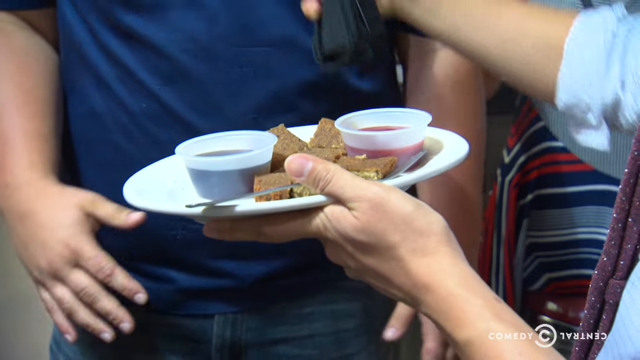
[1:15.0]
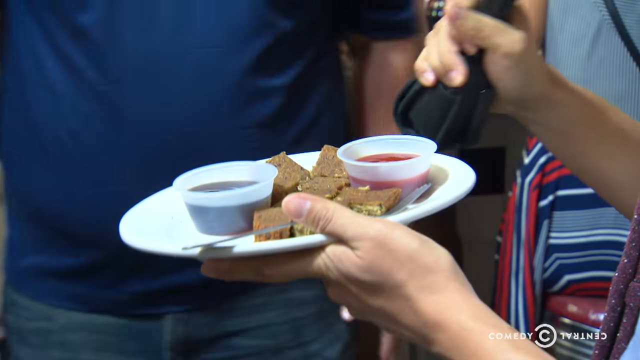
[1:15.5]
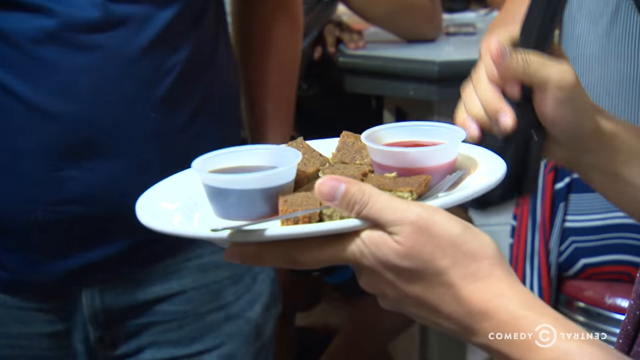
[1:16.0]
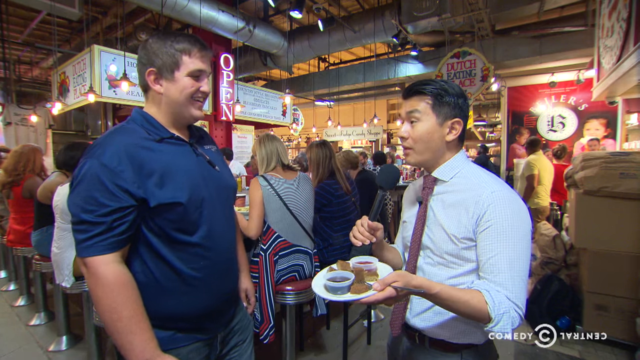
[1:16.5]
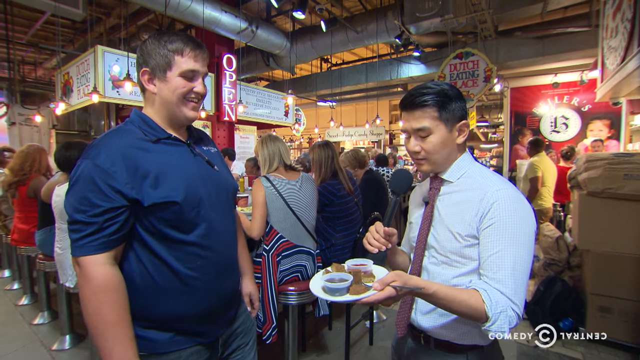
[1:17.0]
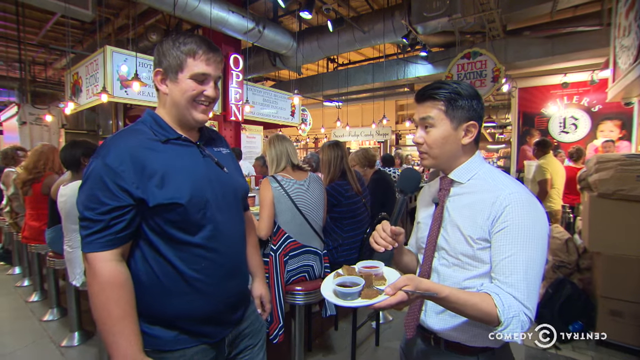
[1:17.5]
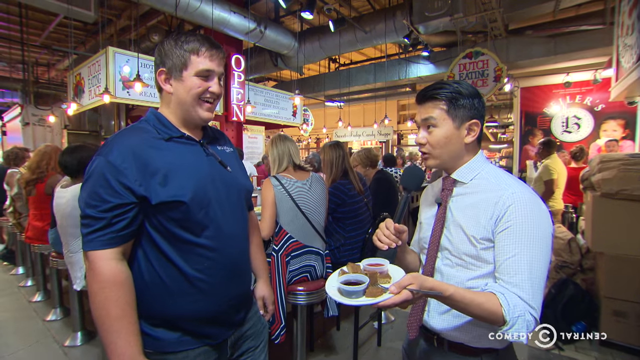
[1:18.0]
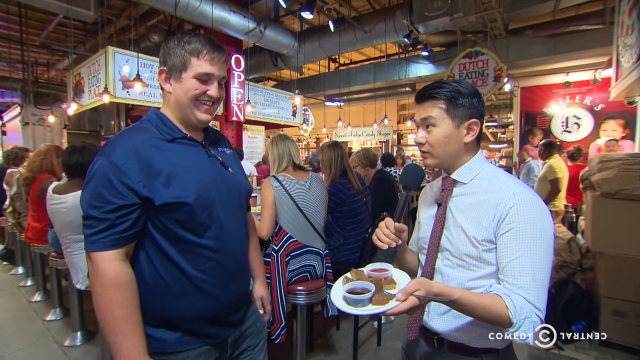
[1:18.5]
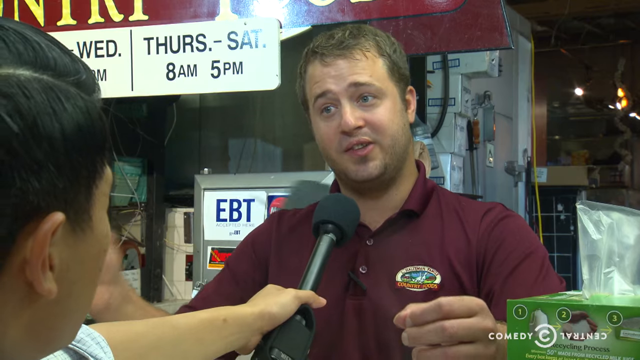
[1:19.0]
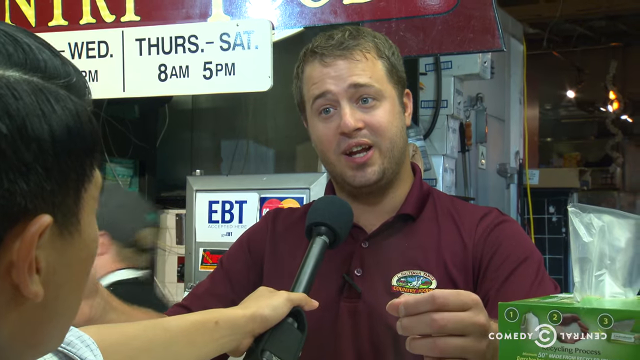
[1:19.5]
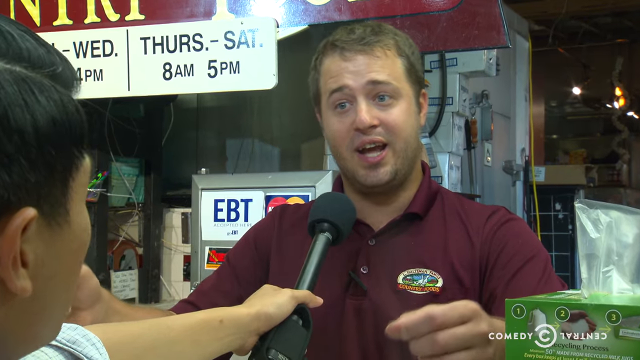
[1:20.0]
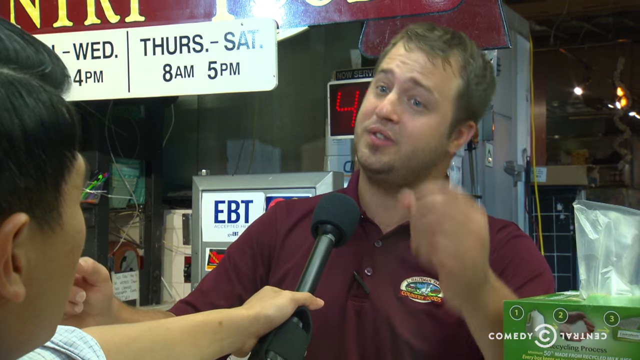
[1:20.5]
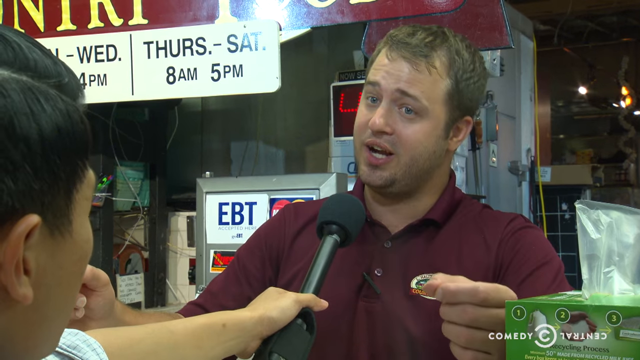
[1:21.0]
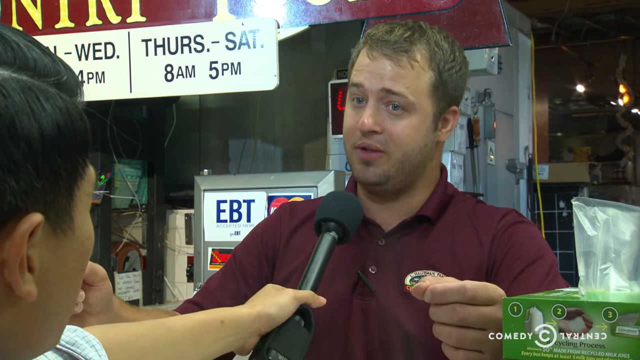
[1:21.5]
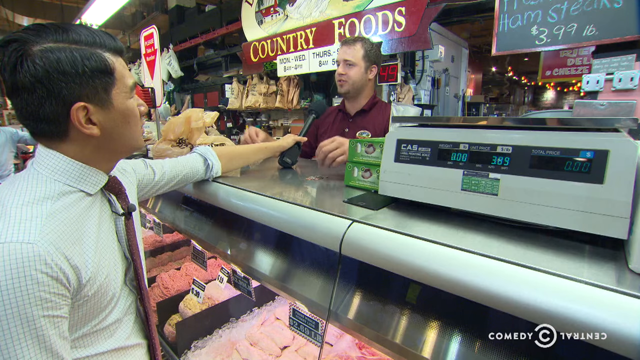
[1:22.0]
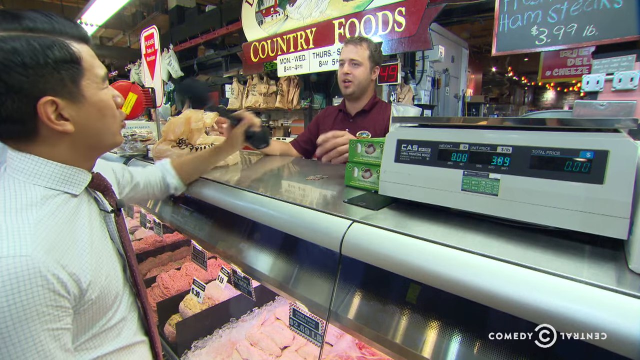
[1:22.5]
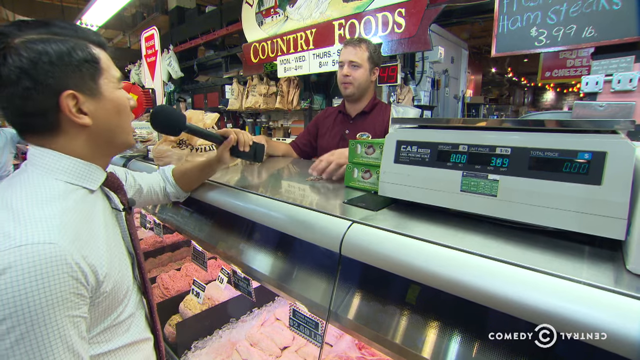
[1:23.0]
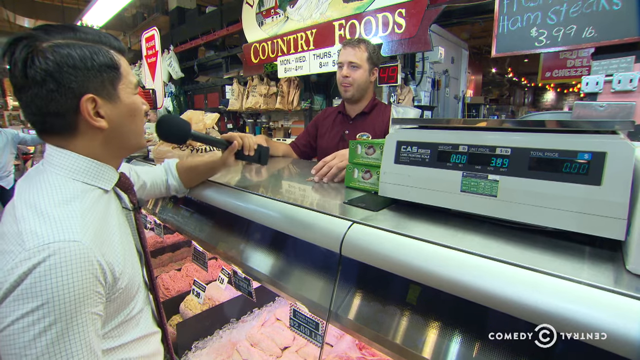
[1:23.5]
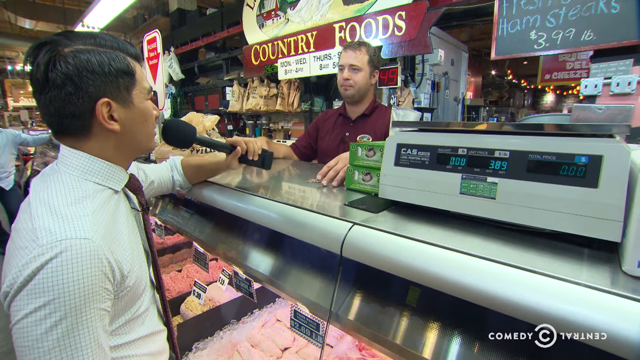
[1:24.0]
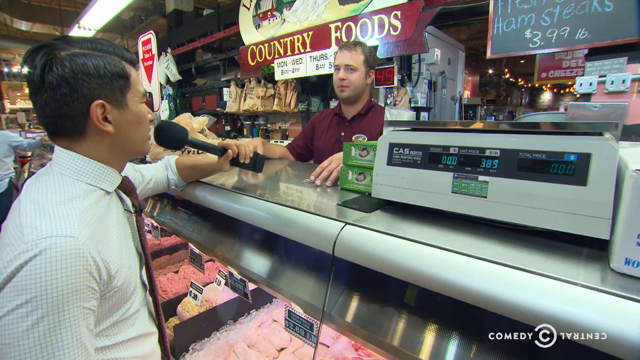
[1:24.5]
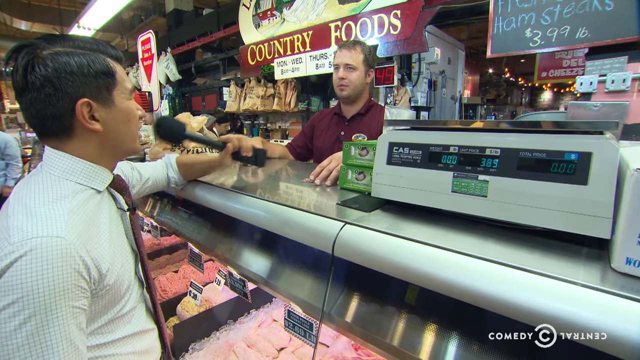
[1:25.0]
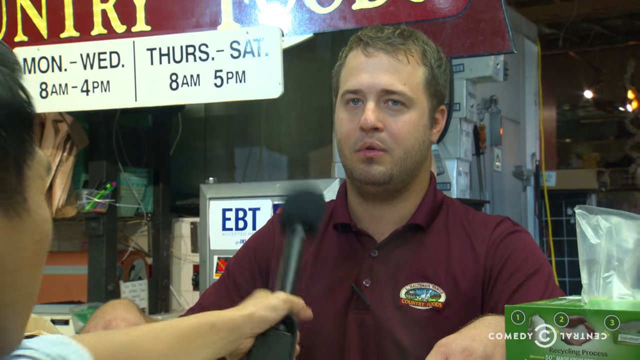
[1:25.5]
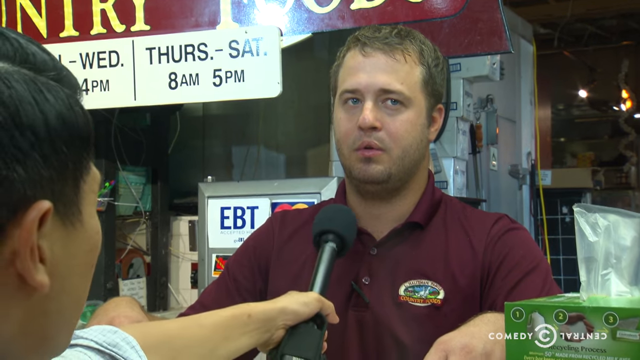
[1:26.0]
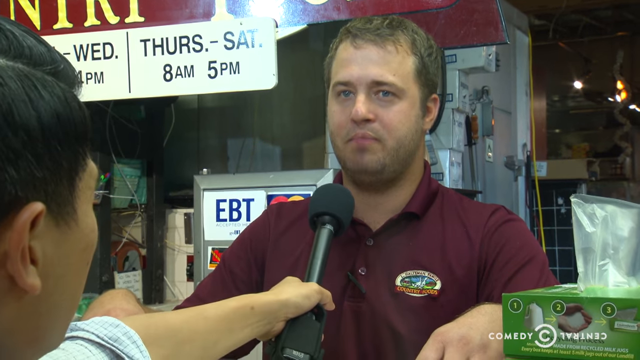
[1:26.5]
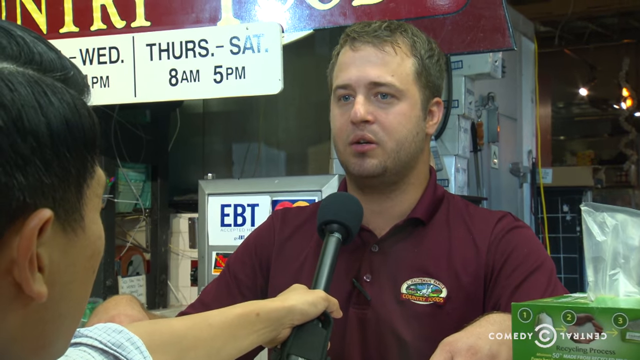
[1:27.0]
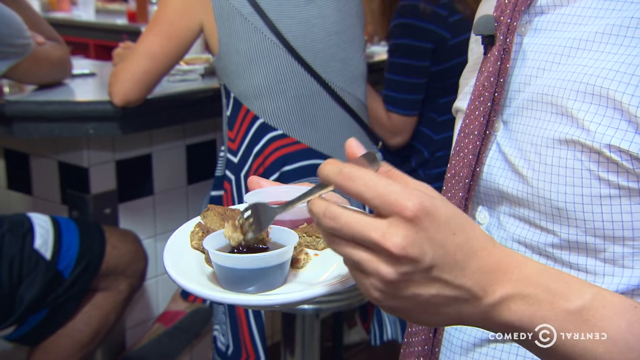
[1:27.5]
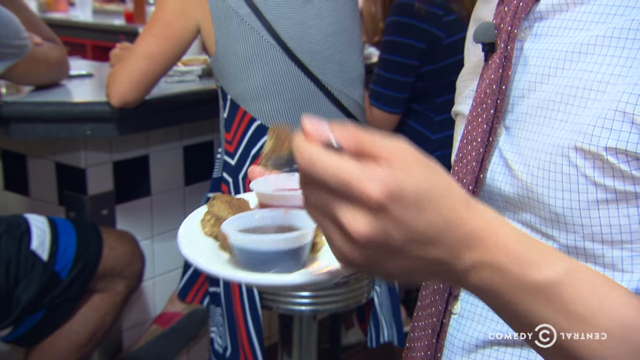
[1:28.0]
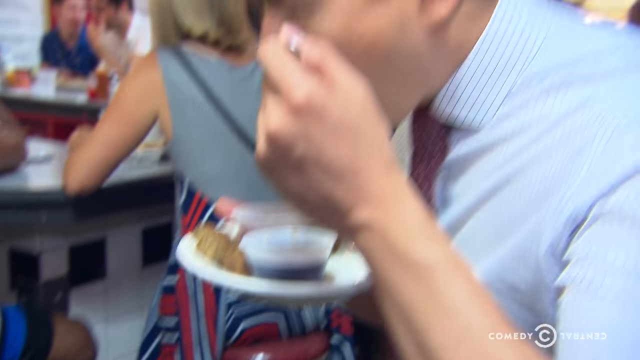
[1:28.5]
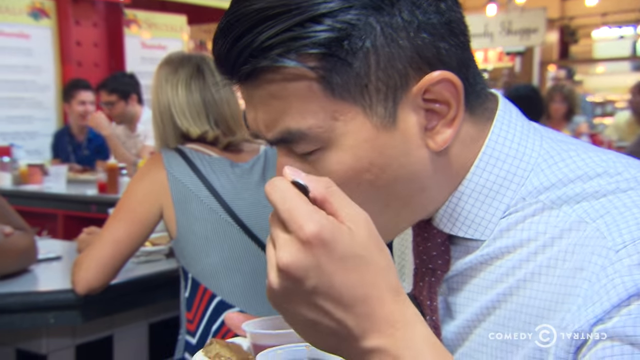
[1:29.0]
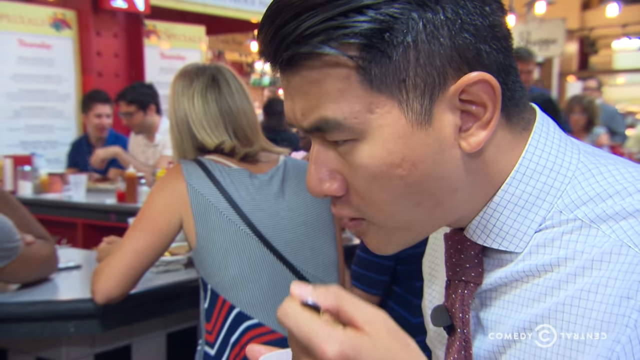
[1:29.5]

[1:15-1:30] A reporter, Asian and seemingly in his late 20s to early 30s, wears a white dress shirt with a tie and gray slacks and holds a microphone. He speaks with a tall, obese white man in a blue polo shirt. The reporter holds a plate of food that looks like meat with two containers of dipping sauces; he takes a piece of meat, dips it in a sauce and puts it in his mouth. A close-up shows the obese man's belly jiggling up and down, apparently while he laughs; the man has breasts. While the reporter eats from the plate, a bustling lunch counter is visible in the background. The reporter also speaks with a white man in a maroon shirt behind a deli counter, with the microphone passed back and forth as if in conversation. Below, the deli counter holds what looks like a wide assortment of meat.